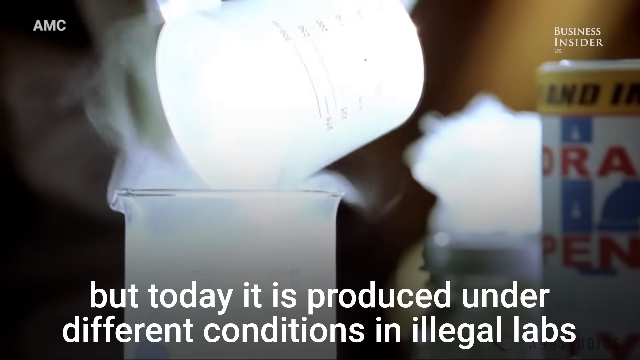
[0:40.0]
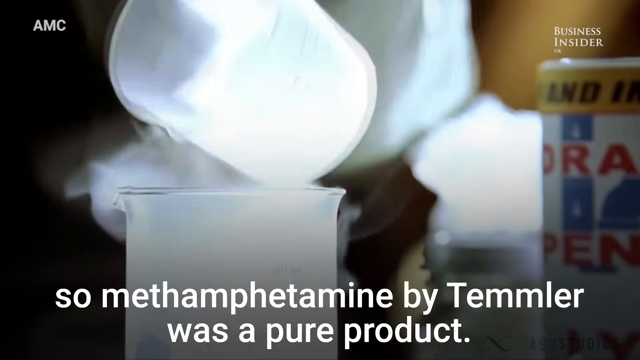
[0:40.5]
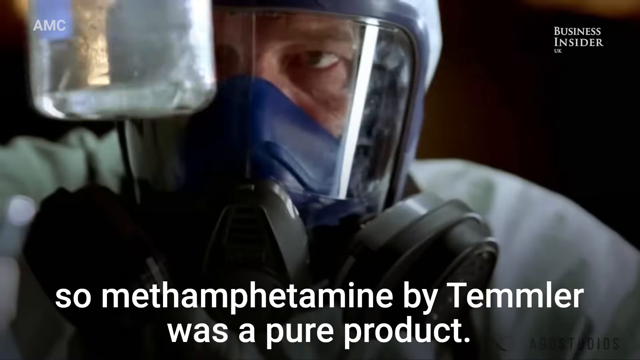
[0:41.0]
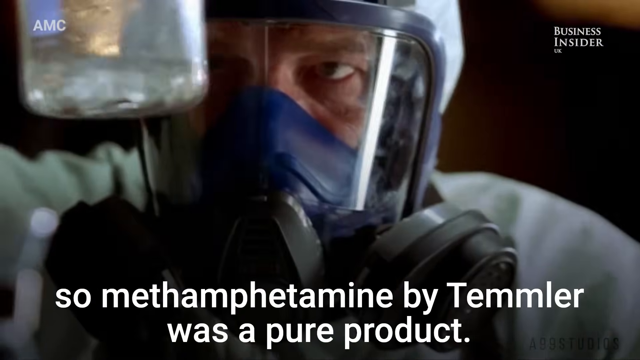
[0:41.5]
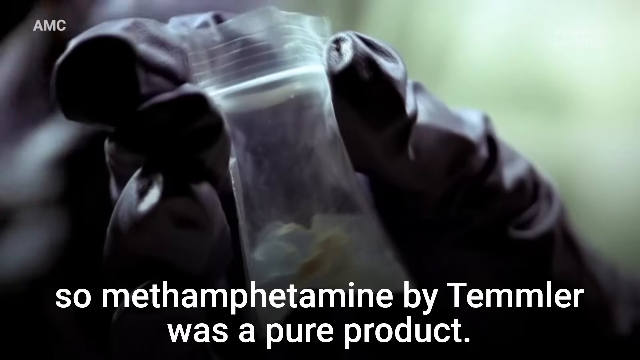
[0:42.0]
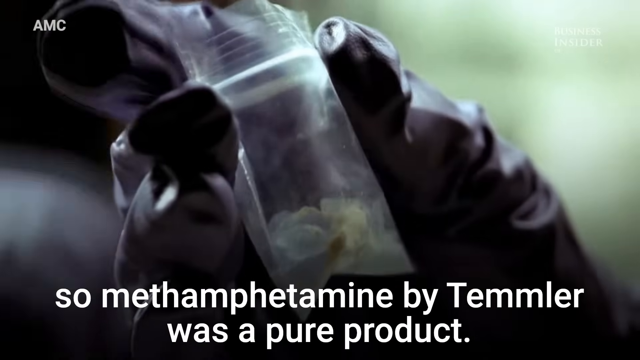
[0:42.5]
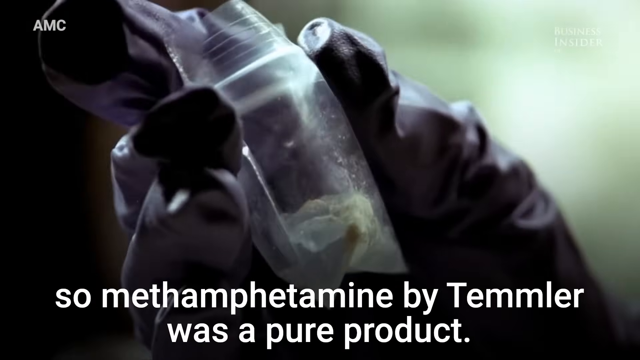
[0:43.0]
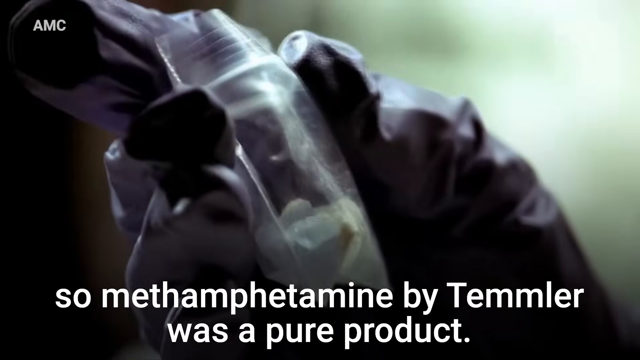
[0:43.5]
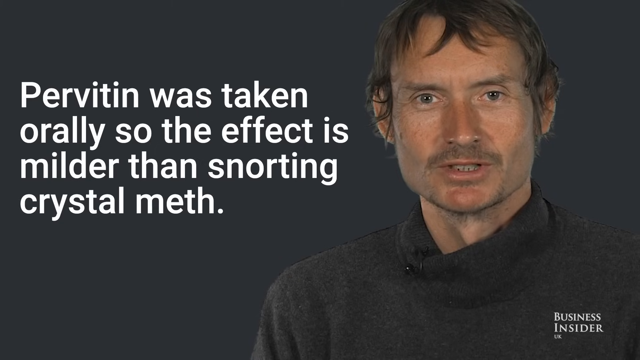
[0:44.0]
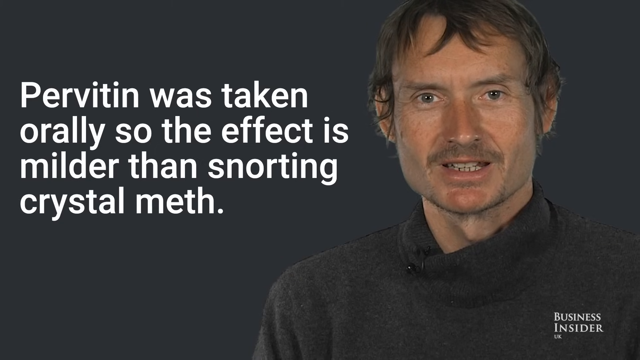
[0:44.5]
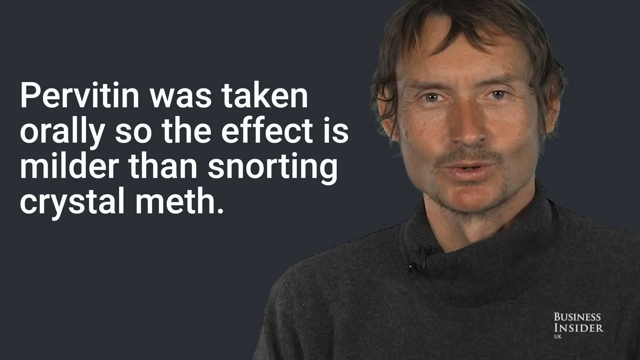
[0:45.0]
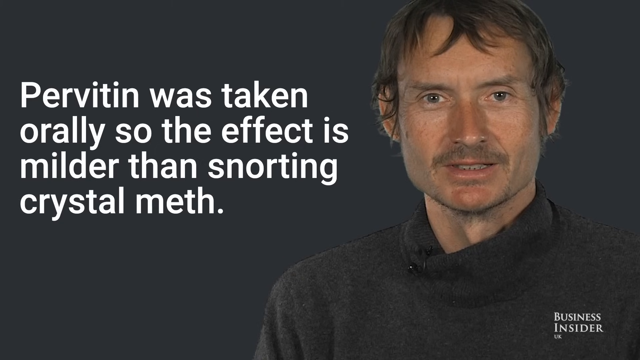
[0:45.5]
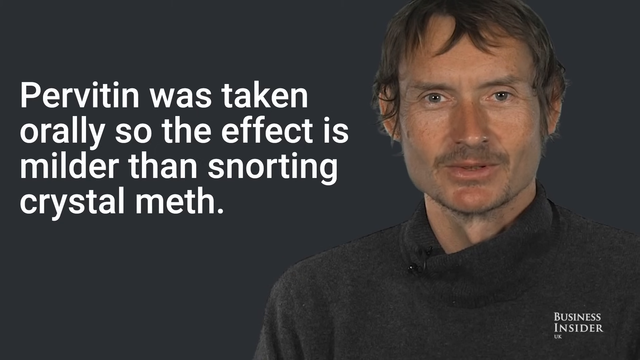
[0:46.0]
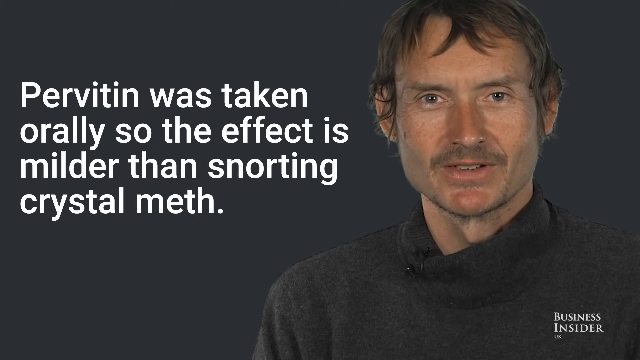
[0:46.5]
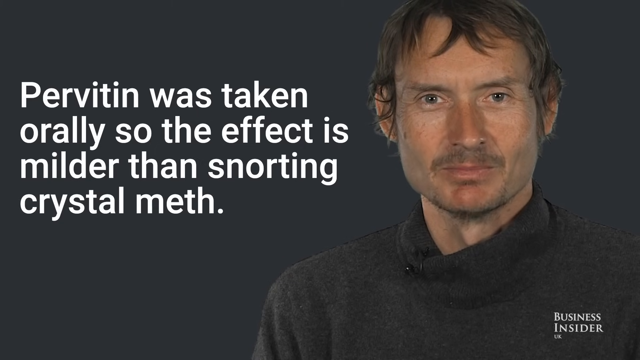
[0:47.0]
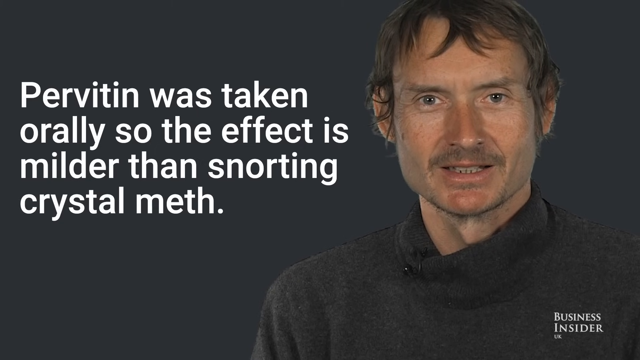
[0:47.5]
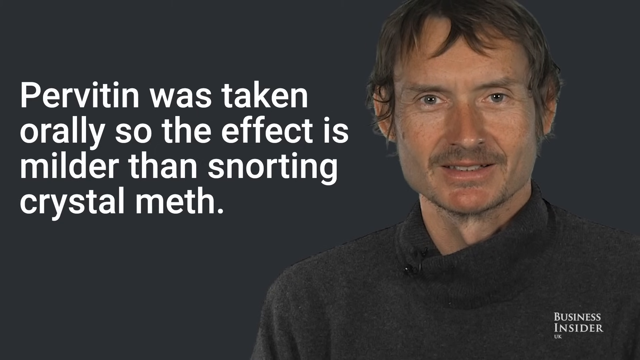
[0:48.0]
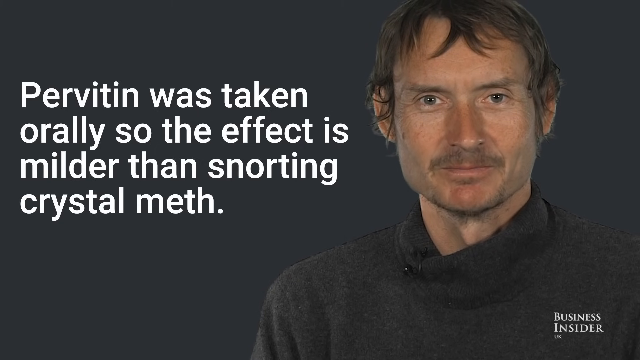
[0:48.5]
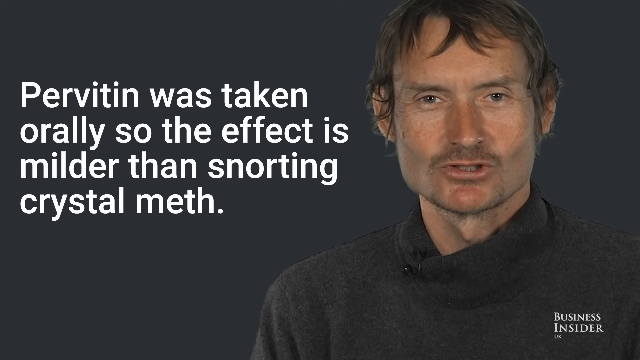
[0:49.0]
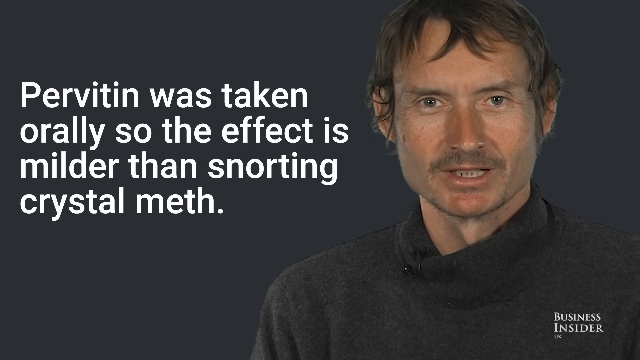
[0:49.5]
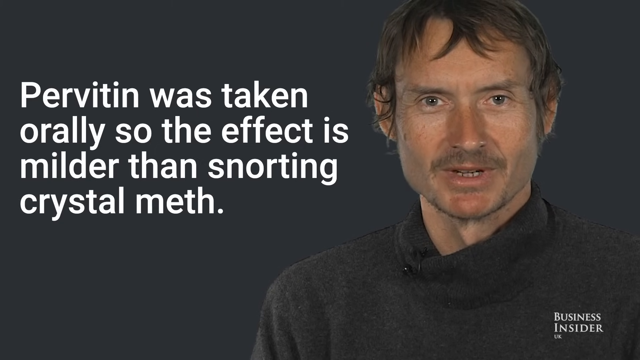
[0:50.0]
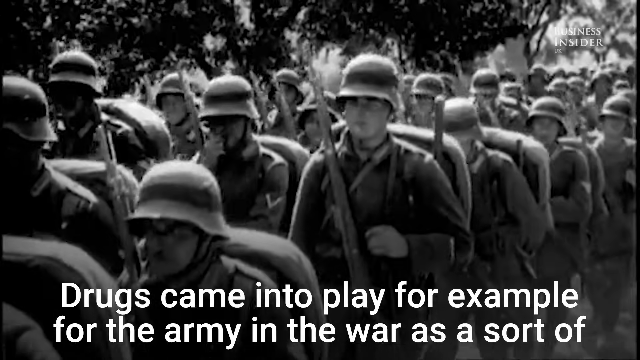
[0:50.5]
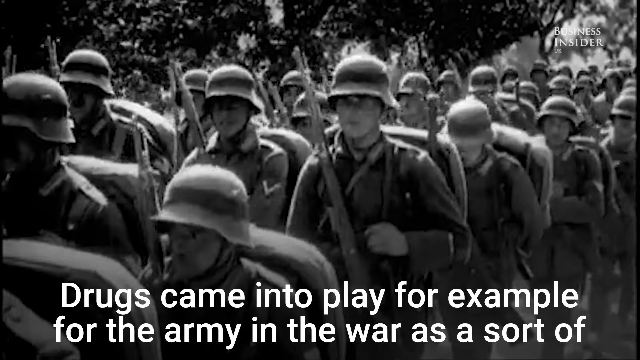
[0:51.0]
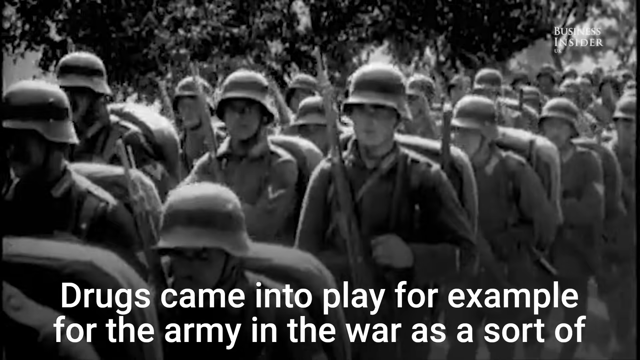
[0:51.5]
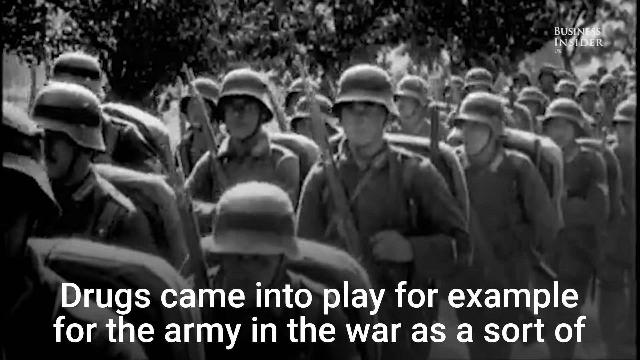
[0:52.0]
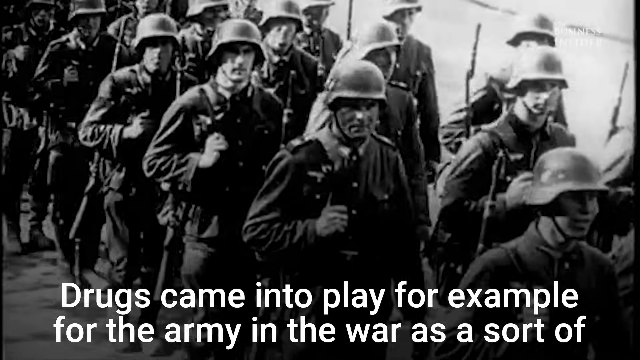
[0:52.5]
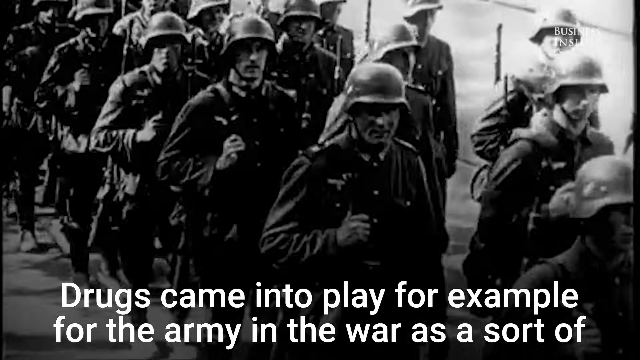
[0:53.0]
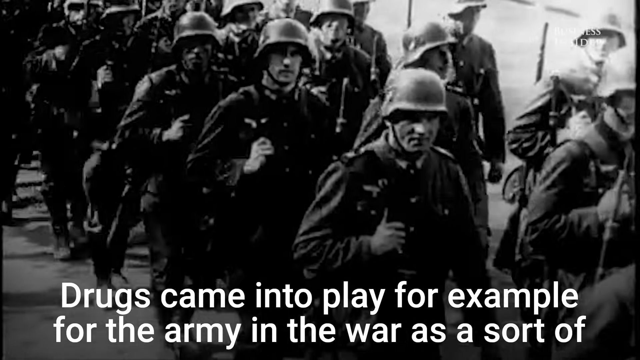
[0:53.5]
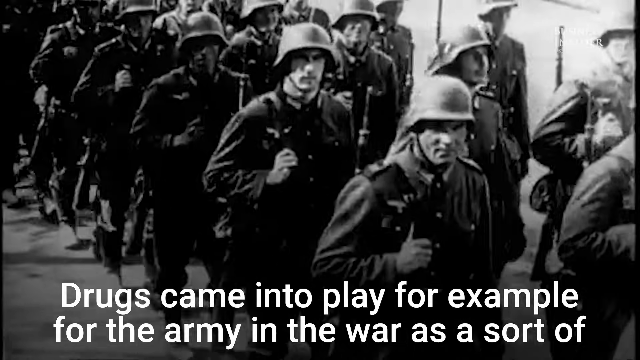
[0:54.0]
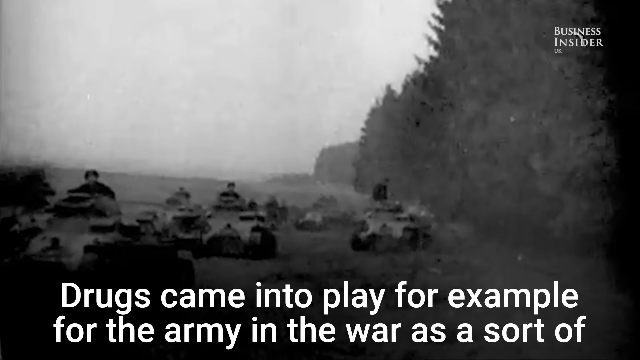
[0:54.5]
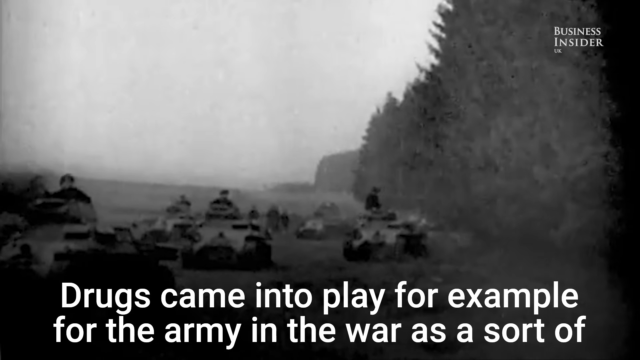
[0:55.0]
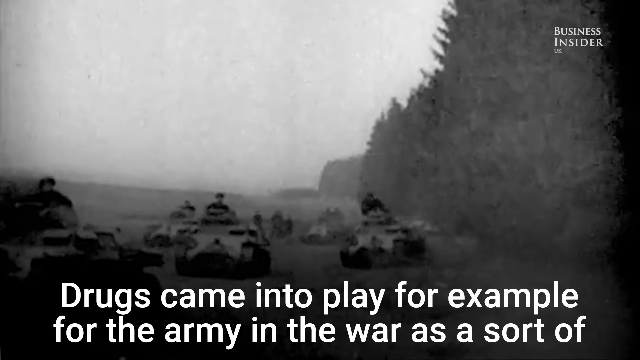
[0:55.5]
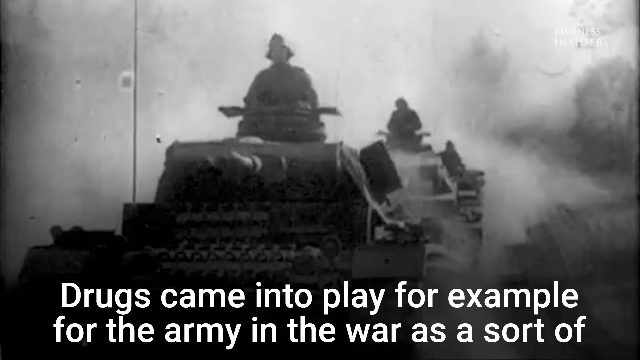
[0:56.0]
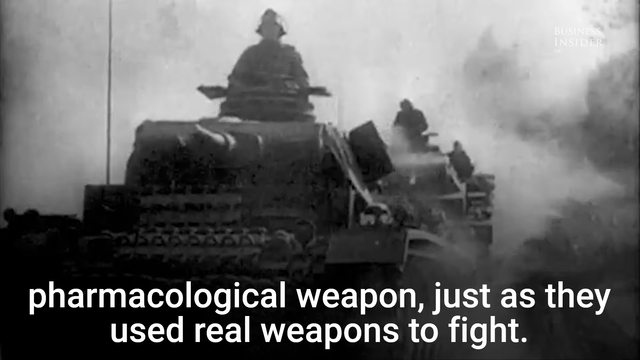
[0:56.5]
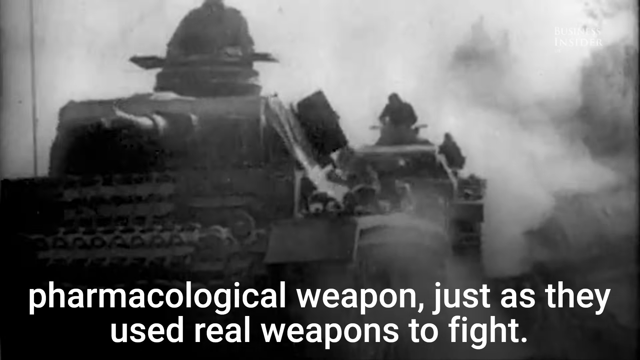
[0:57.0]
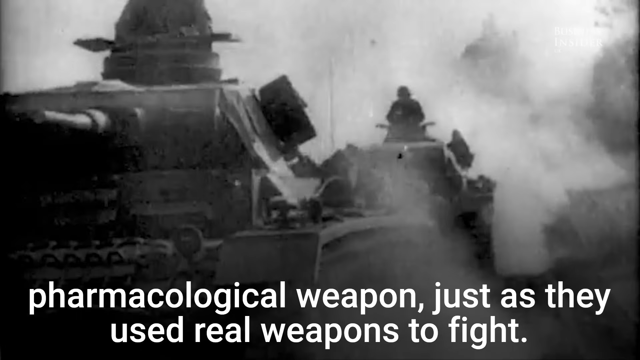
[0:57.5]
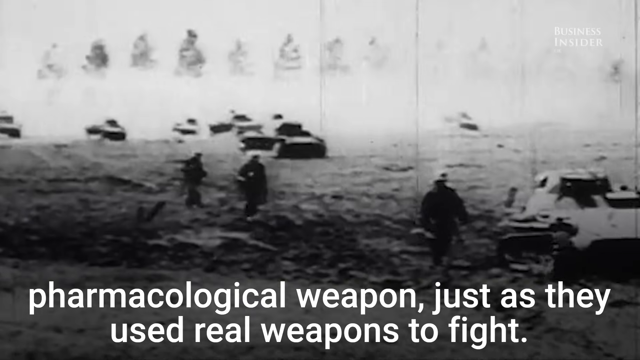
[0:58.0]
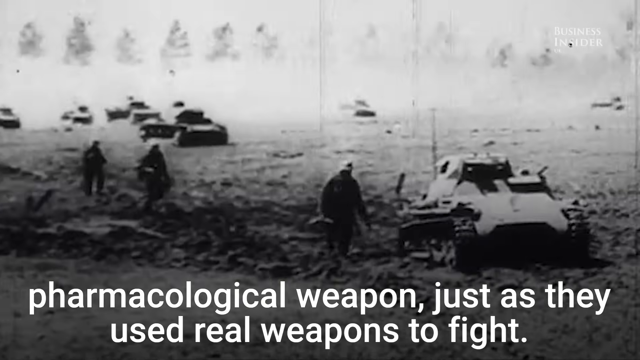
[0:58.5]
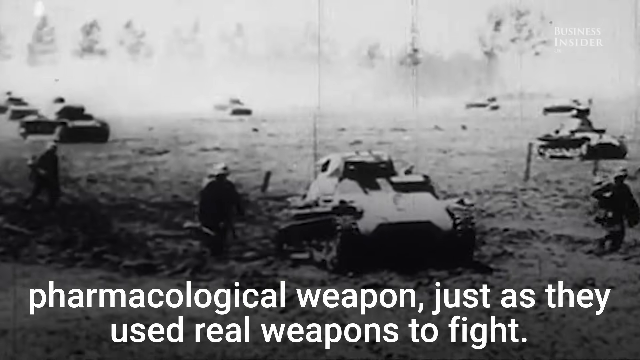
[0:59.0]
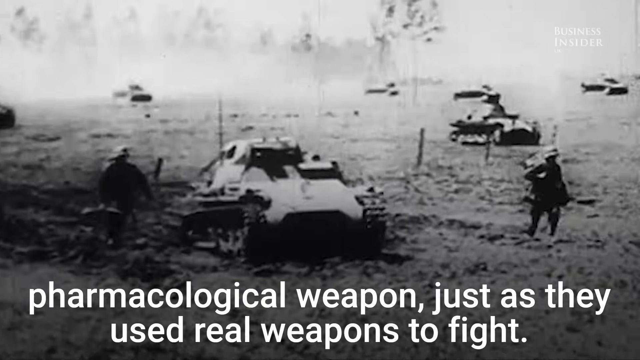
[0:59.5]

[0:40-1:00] Lab scientists put the crystal meth into lab beakers and form it, and they put some into plastic bags; it looks like crystals. The same man appears again; he has a pale brown mustache and a brownish-black shirt. Text to his left says "Perpetin" and "it's taken orally so the effect is milder than". More stock footage follows of soldiers walking, then tanks kind of going across a battlefield with soldiers running on it. All of the war footage of soldiers is in black and white.